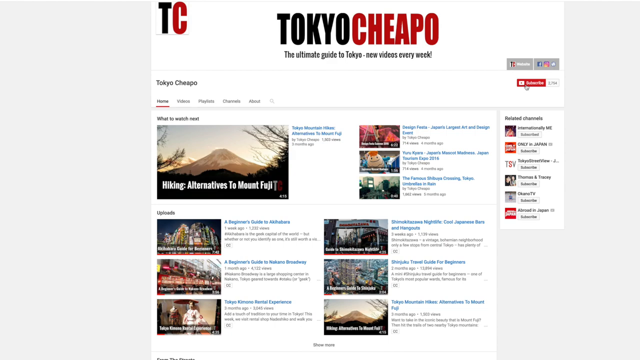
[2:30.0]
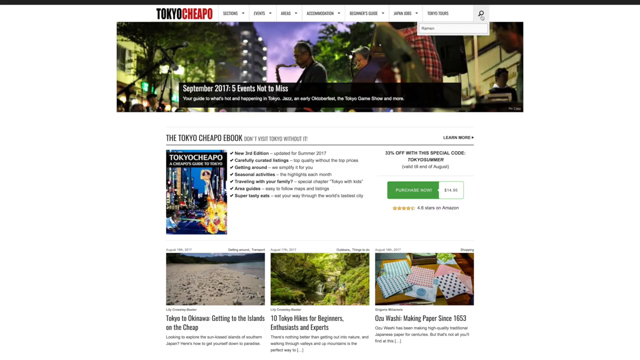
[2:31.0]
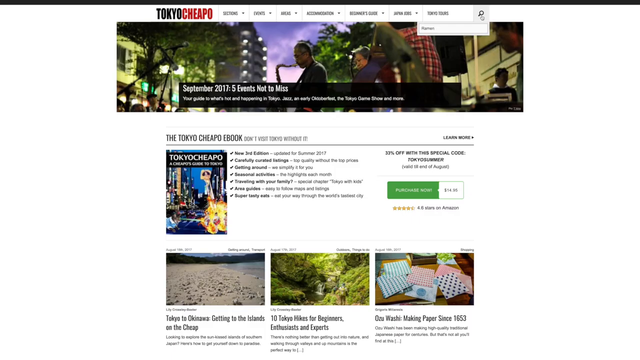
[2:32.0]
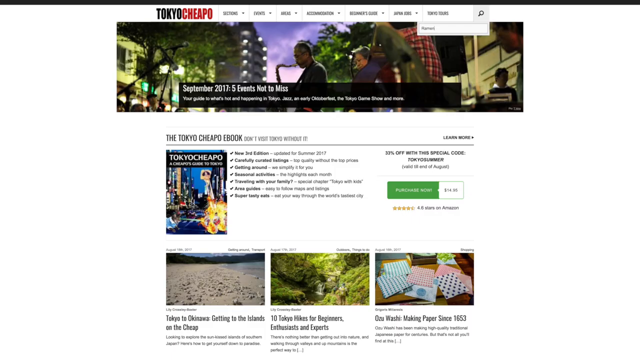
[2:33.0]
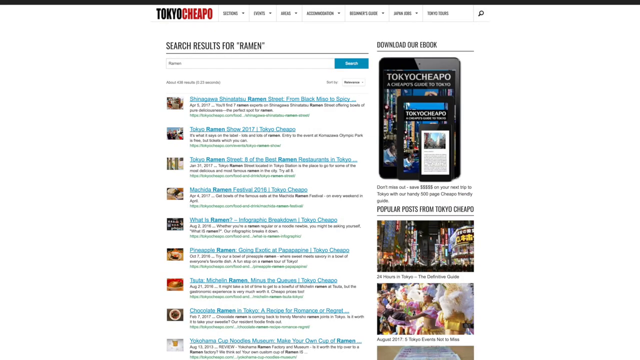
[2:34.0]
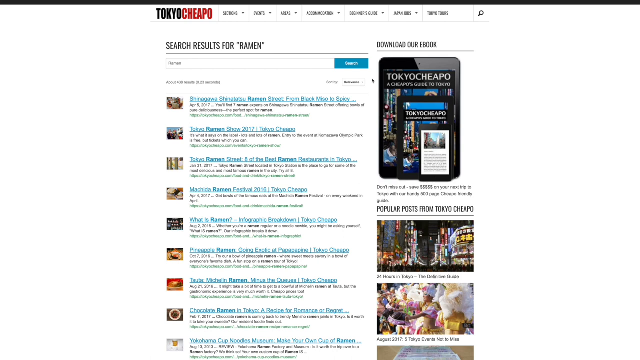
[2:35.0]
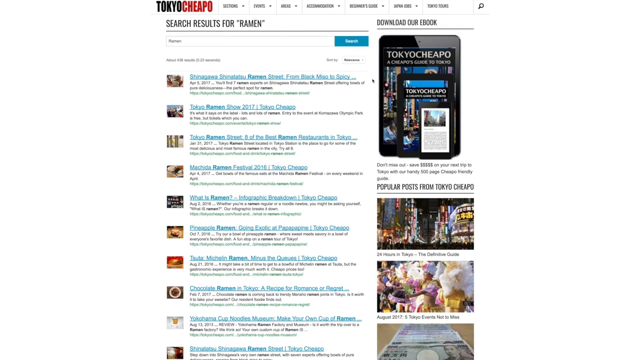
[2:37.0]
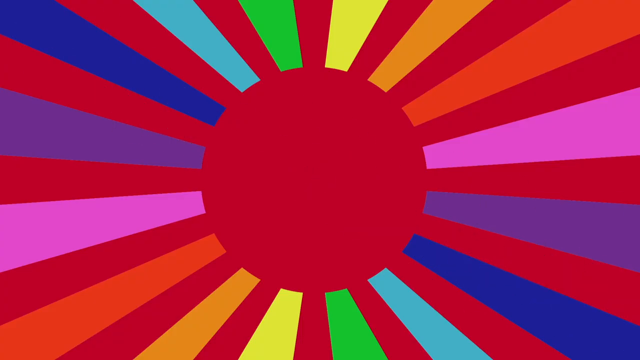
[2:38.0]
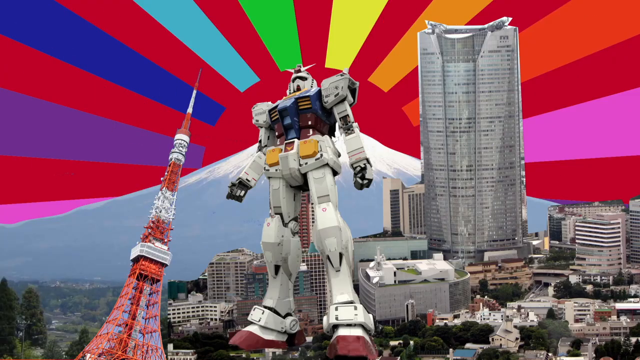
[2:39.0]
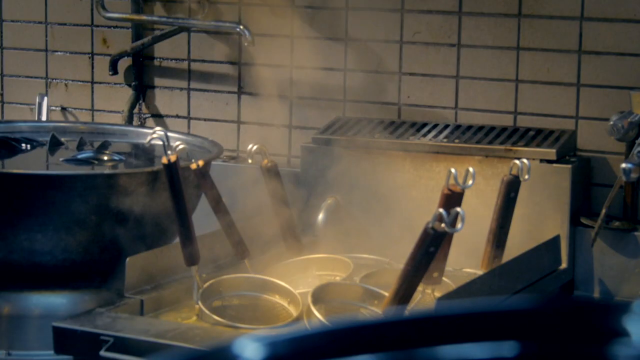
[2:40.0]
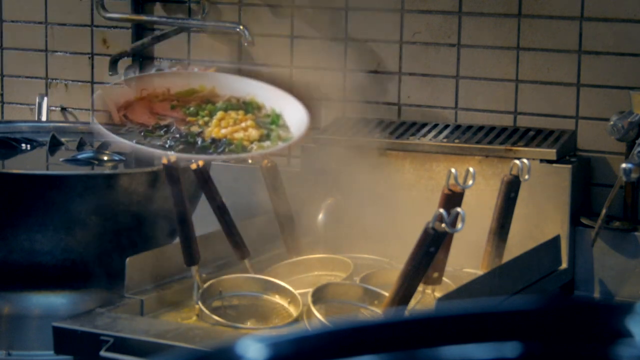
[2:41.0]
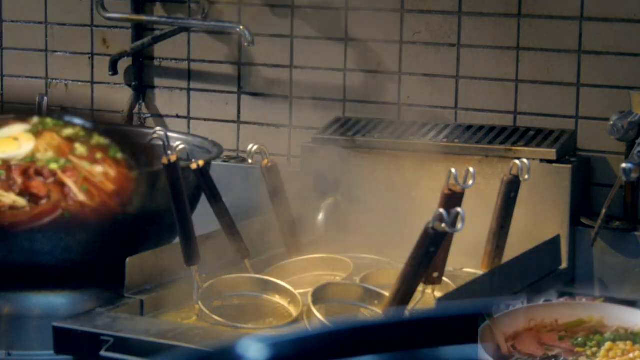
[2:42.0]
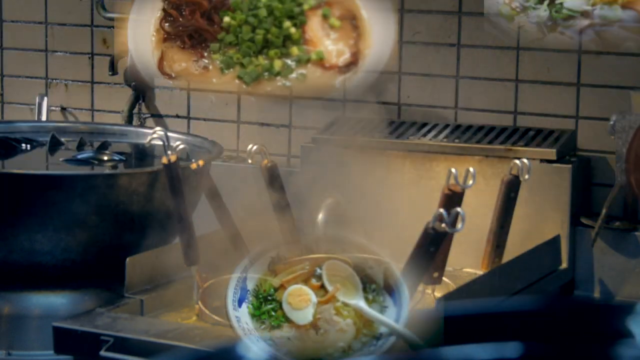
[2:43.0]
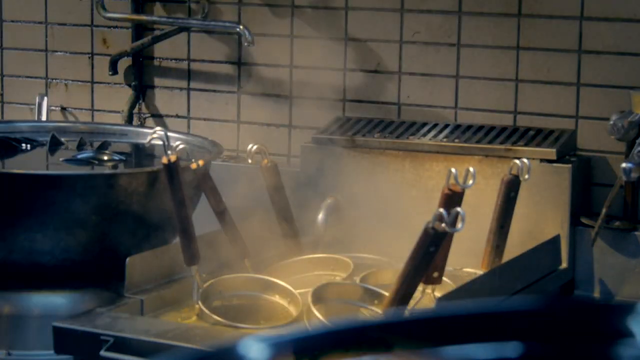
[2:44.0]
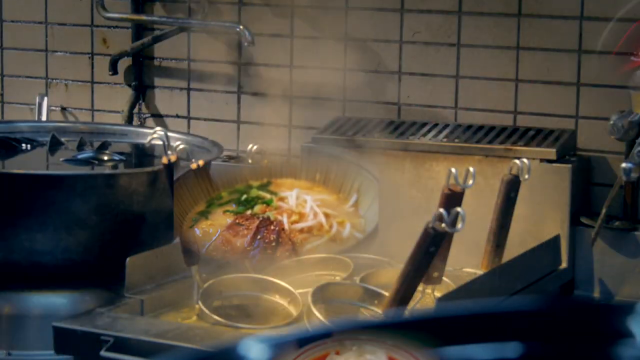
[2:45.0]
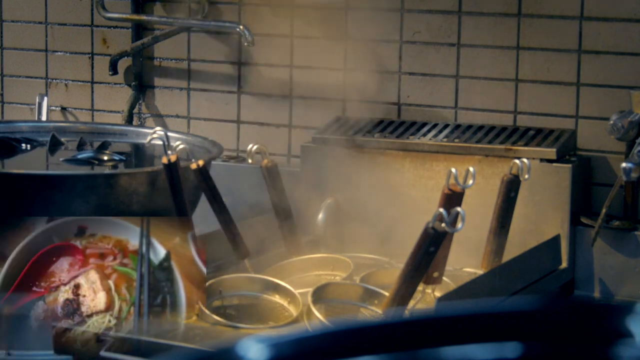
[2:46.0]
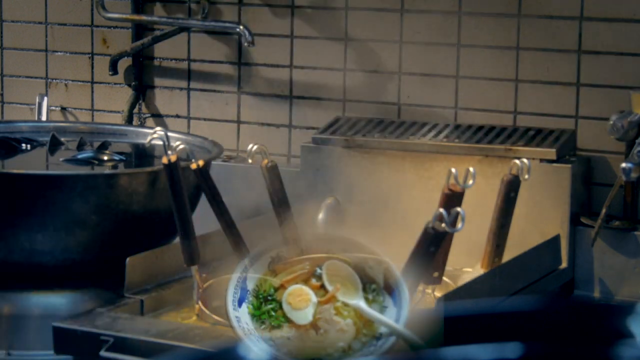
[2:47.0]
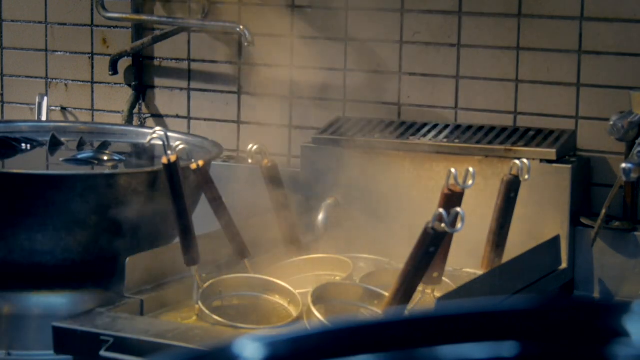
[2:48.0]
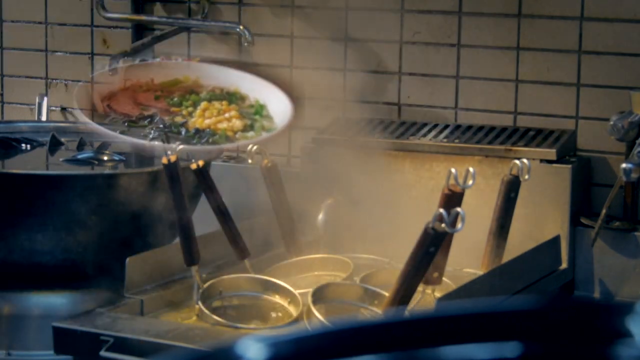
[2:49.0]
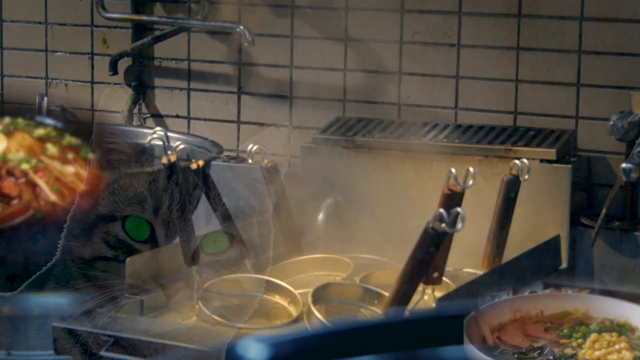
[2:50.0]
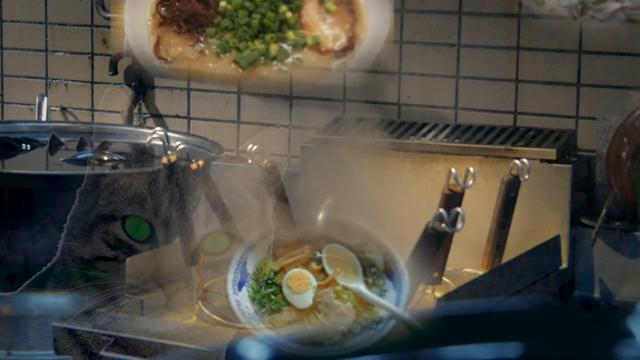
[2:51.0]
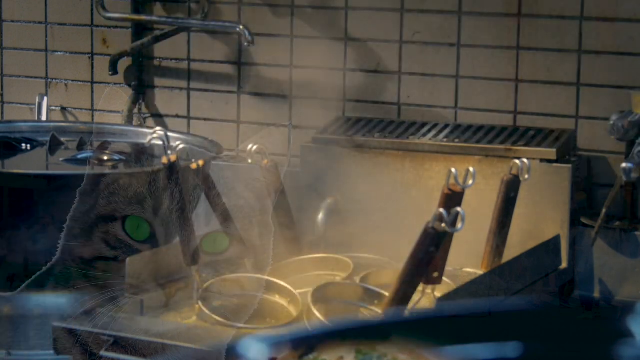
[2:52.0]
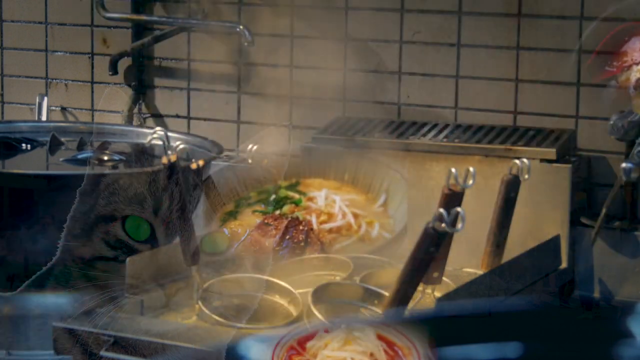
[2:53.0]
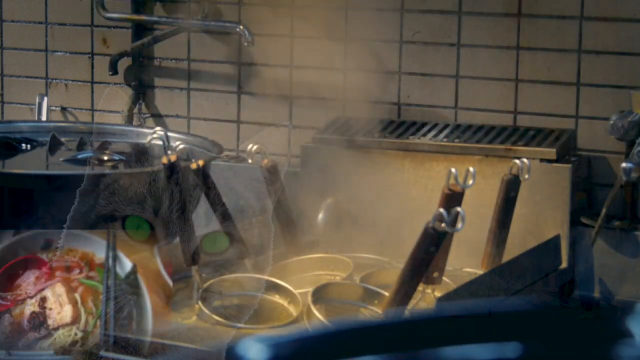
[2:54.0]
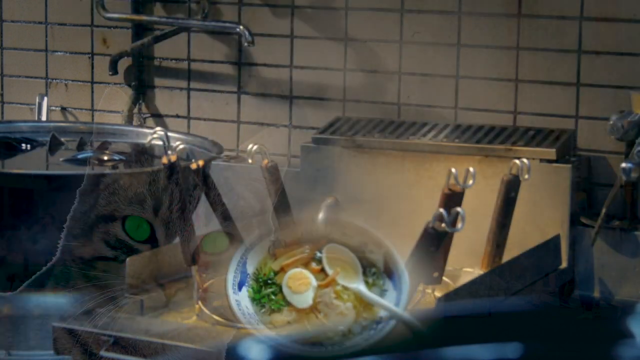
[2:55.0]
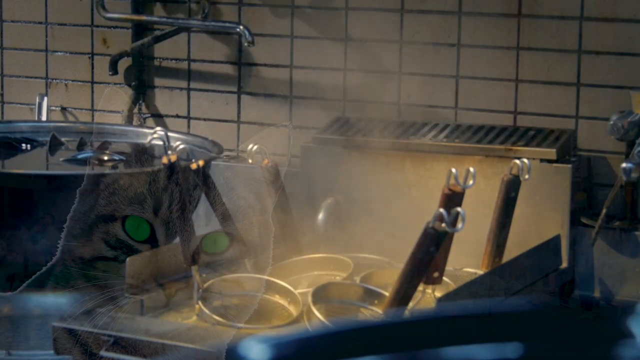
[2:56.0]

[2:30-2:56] The Tokyo Cheapo YouTube channel page is followed by two different screens showing a blog and the Tokyo Cheapo book being sold on the Tokyo Cheapo website, with a white background, a banner of Japan, and the text "September 2017" and "five events not to miss." Then there is an image of search results for ramen showing Tokyo Cheapo's recommended ramen spots, with an option on the right side to download a book, and a tablet showing Tokyo Cheapo's website. An imperial Japanese flag appears with a rainbow in the background, along with Mt. Fuji, skylines of Japan and Tokyo, red and multi-coloured rainbows, a transformer, cooking, and a gundam. Many different types of ramen and food fly all over the screen in a kitchen, and there is a cat with green eyes.